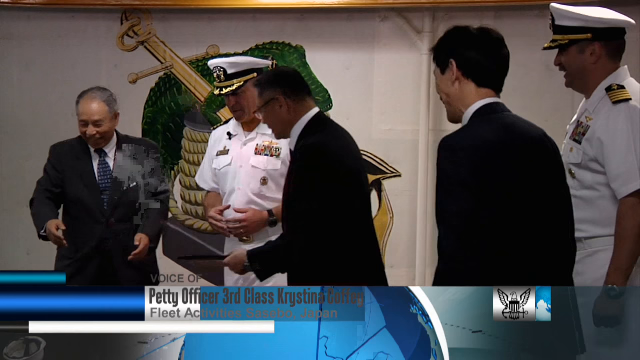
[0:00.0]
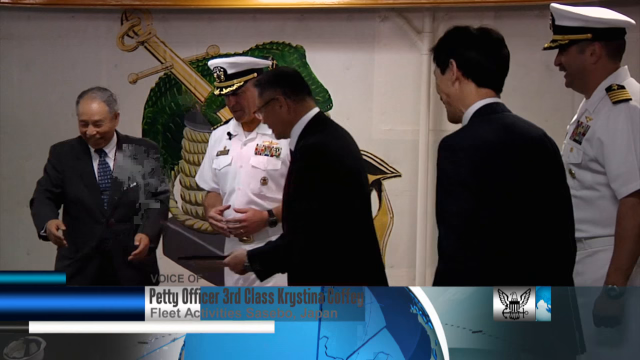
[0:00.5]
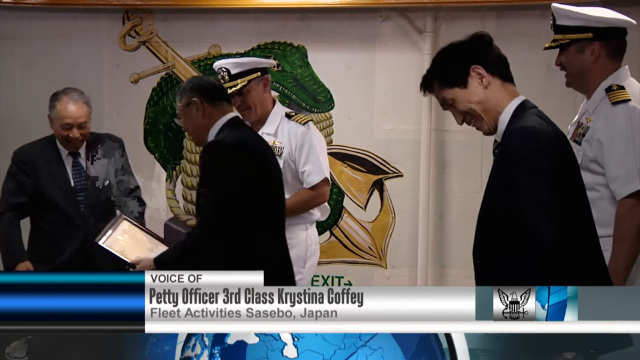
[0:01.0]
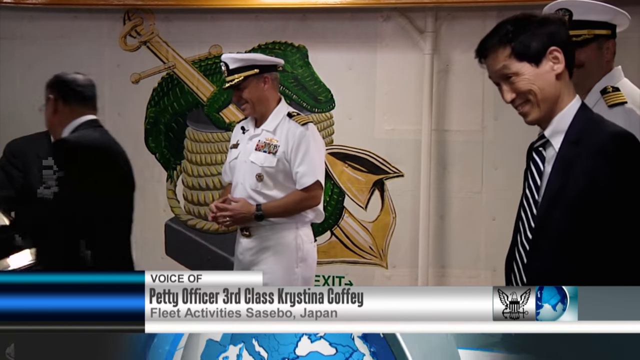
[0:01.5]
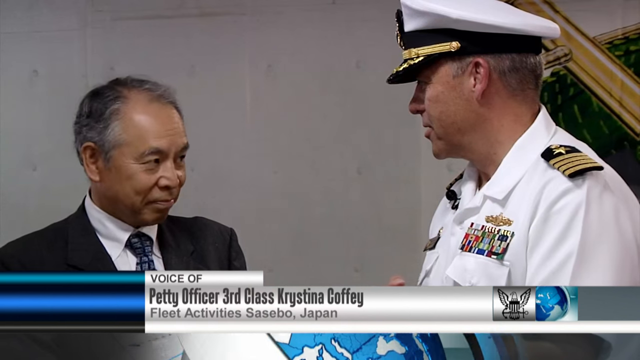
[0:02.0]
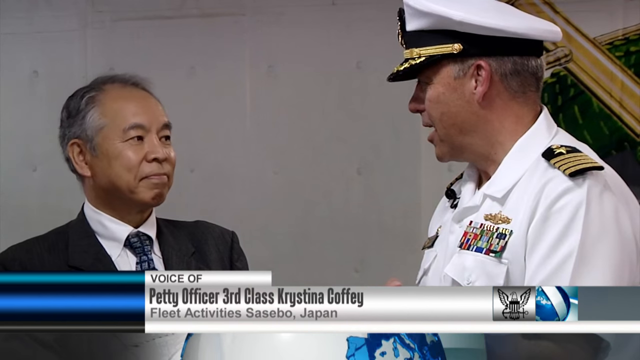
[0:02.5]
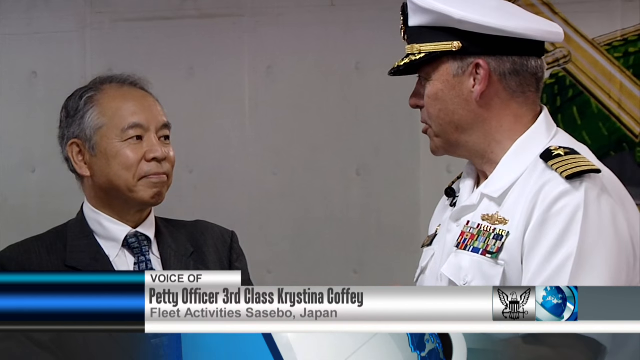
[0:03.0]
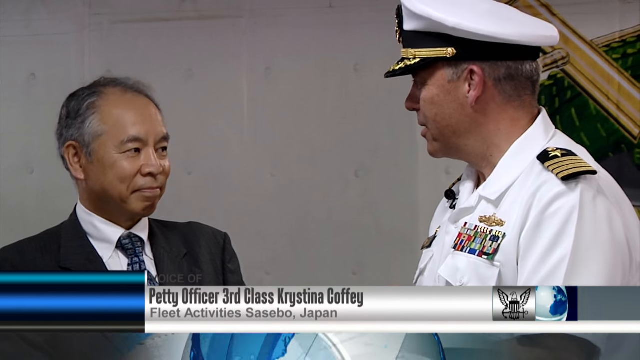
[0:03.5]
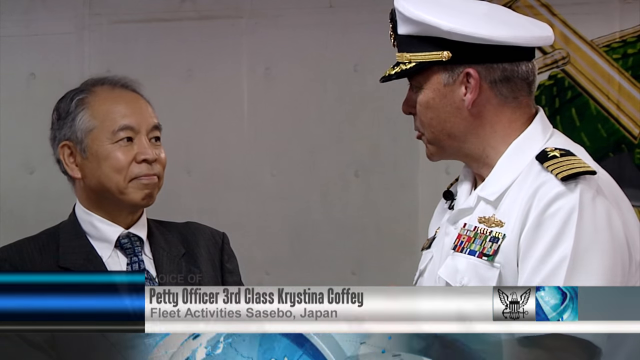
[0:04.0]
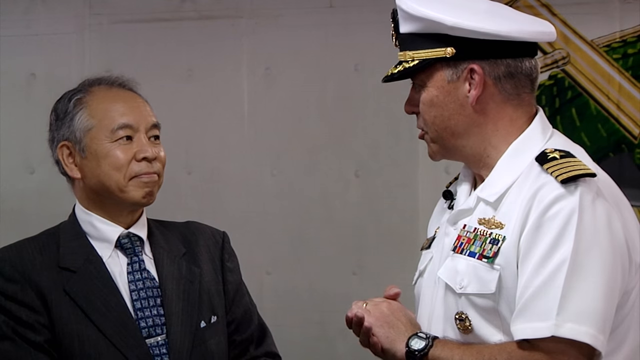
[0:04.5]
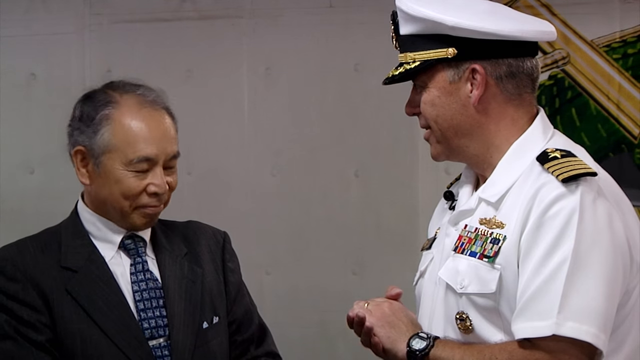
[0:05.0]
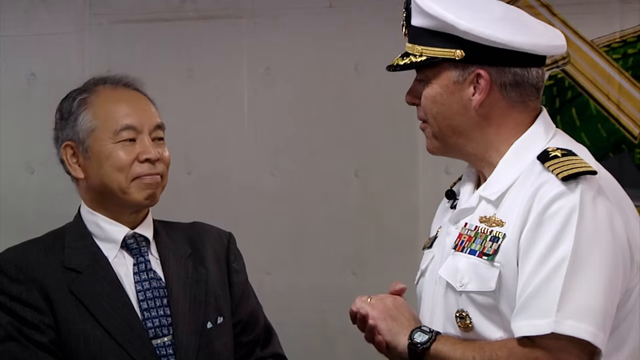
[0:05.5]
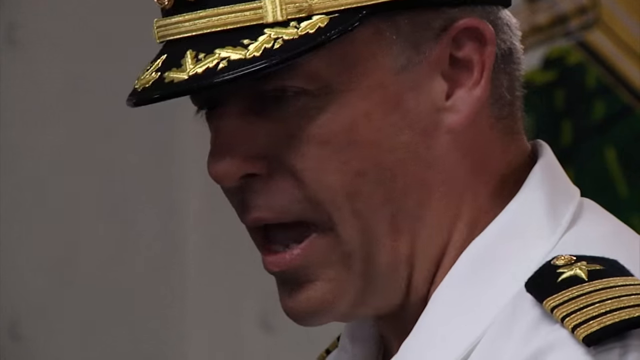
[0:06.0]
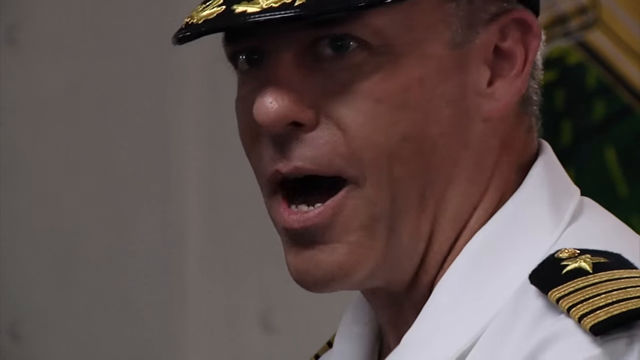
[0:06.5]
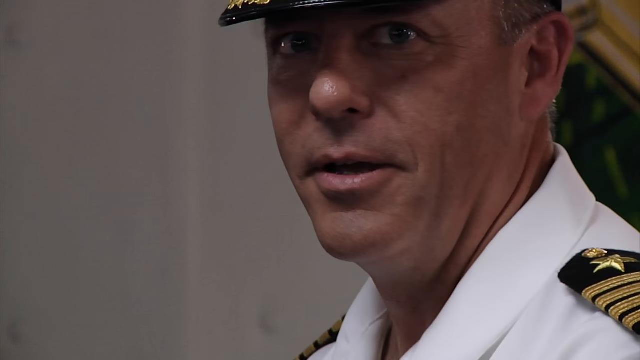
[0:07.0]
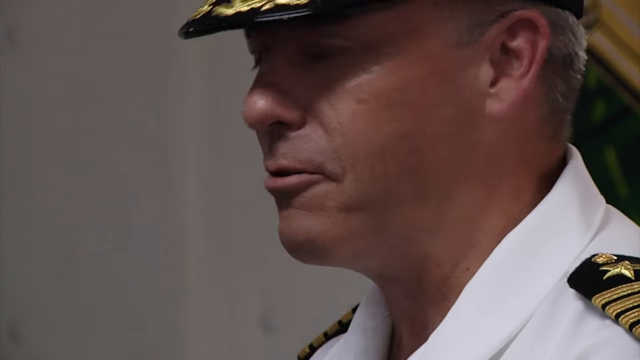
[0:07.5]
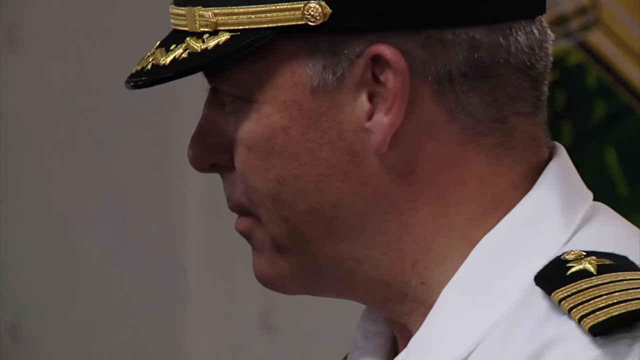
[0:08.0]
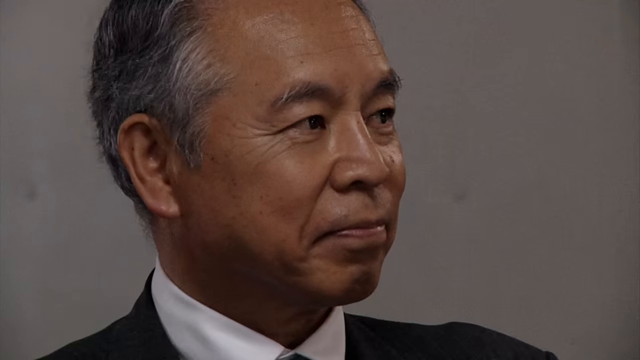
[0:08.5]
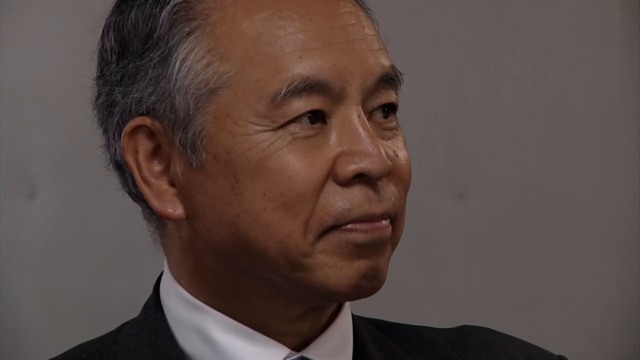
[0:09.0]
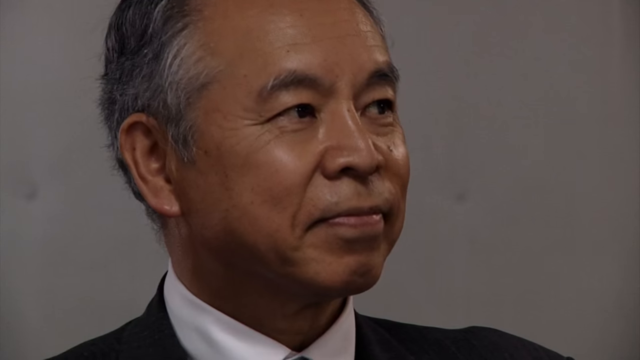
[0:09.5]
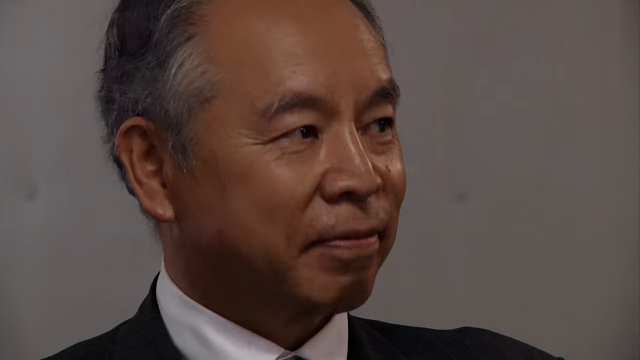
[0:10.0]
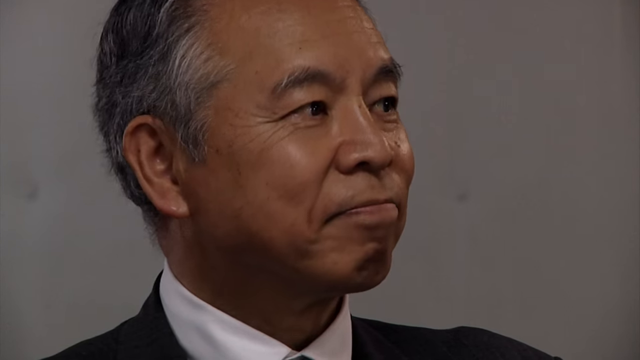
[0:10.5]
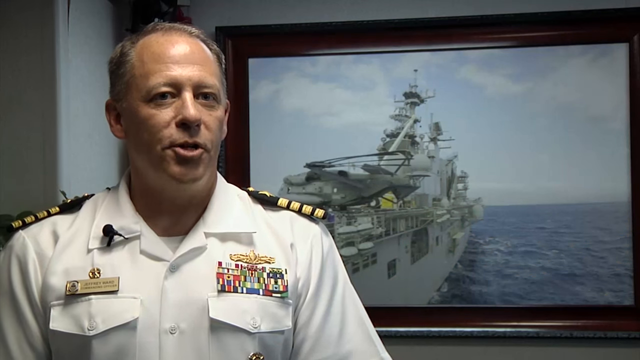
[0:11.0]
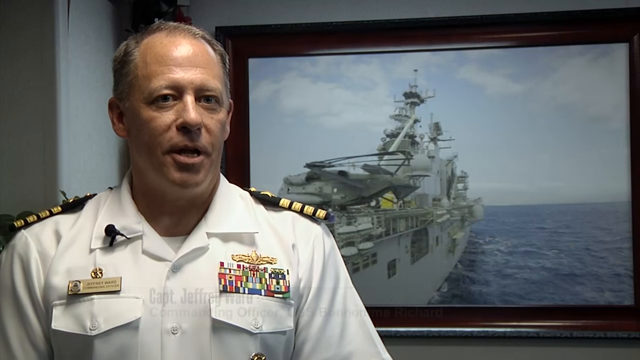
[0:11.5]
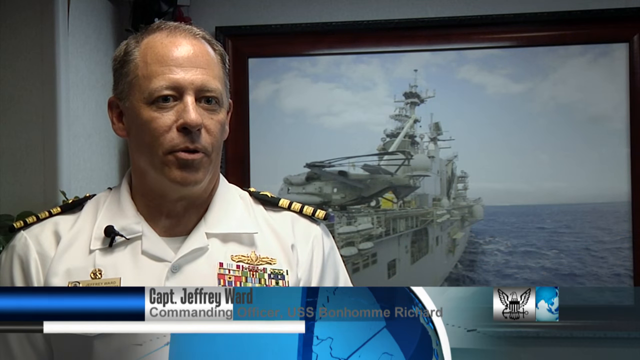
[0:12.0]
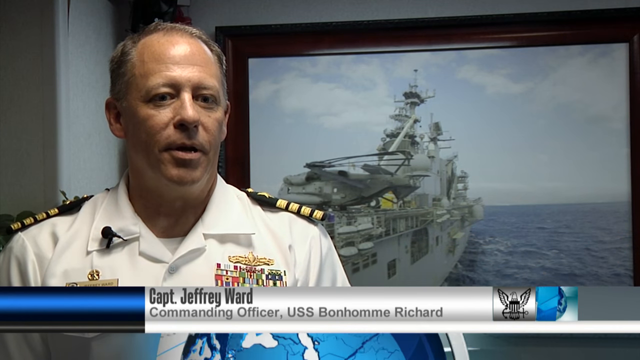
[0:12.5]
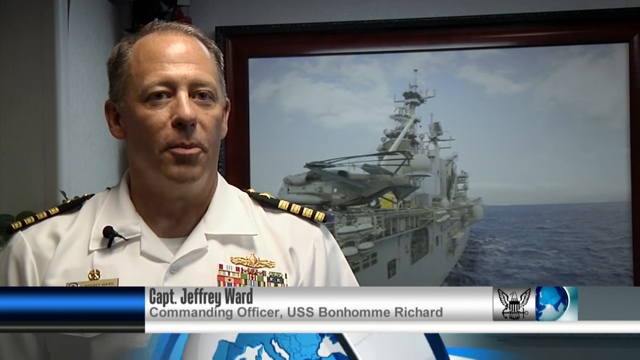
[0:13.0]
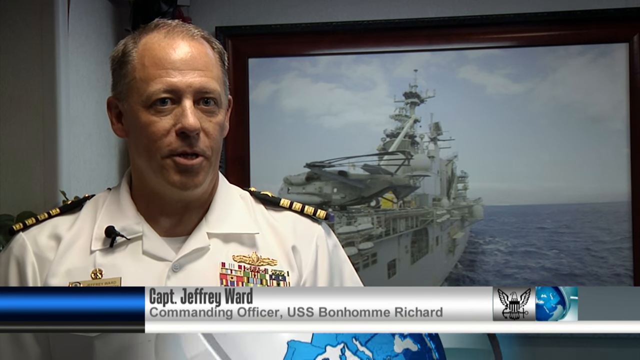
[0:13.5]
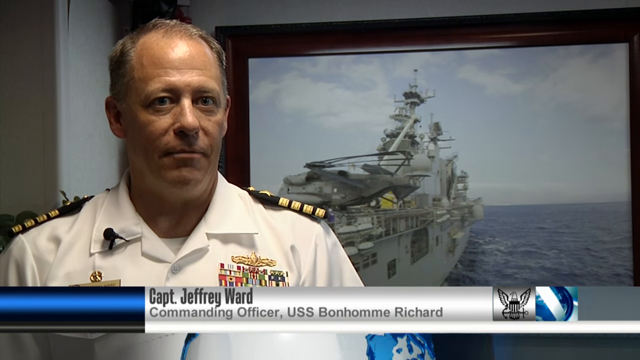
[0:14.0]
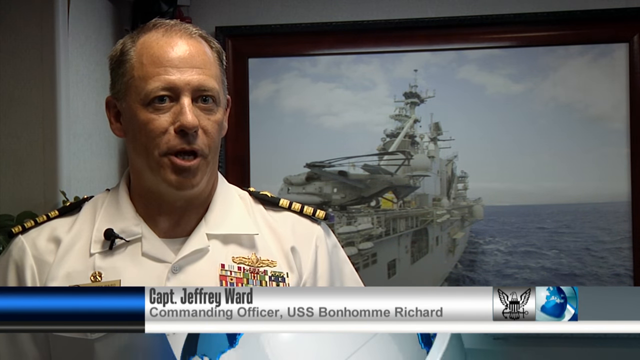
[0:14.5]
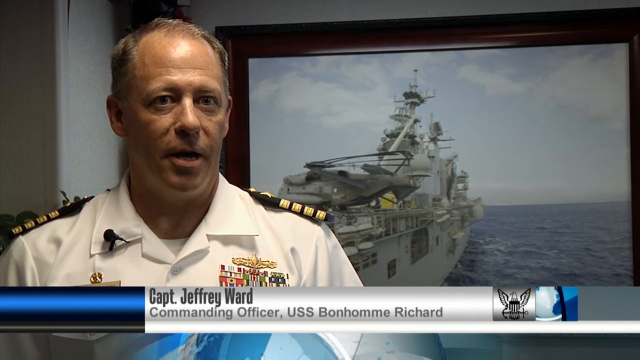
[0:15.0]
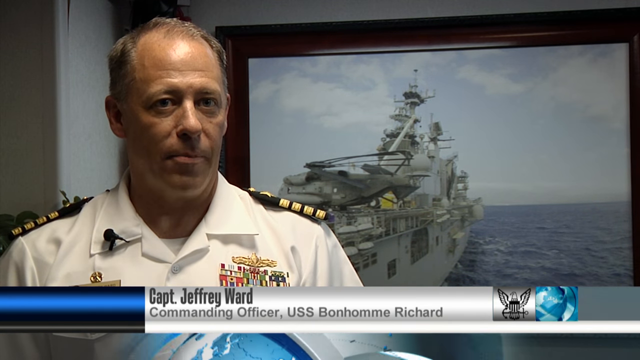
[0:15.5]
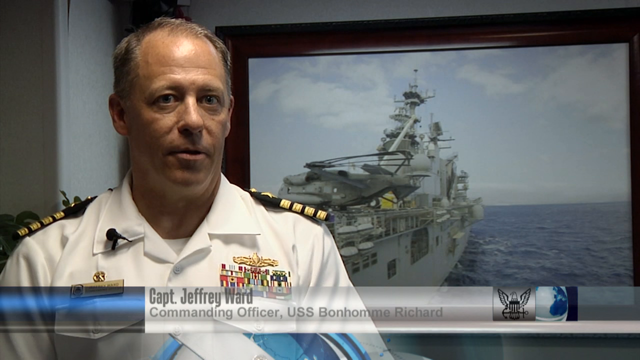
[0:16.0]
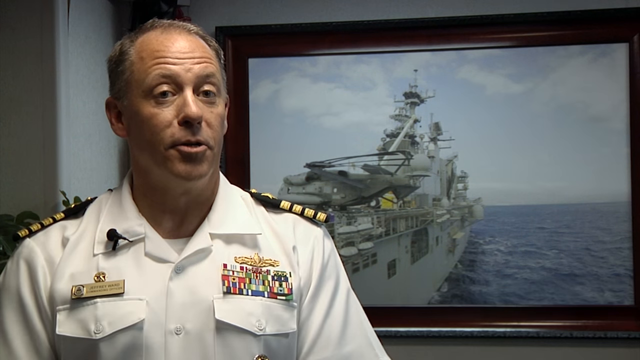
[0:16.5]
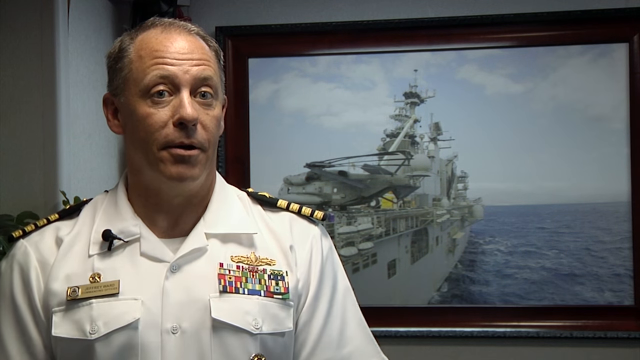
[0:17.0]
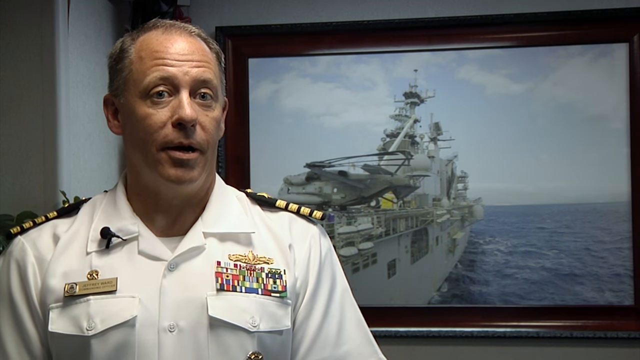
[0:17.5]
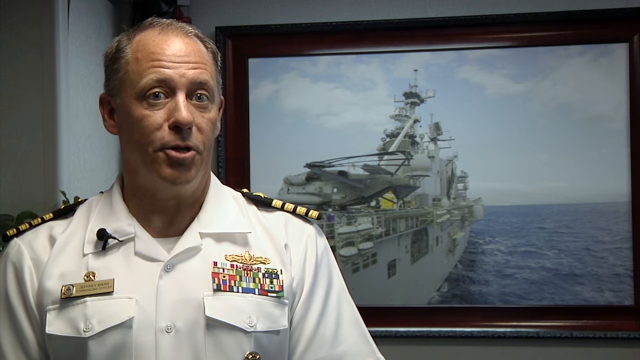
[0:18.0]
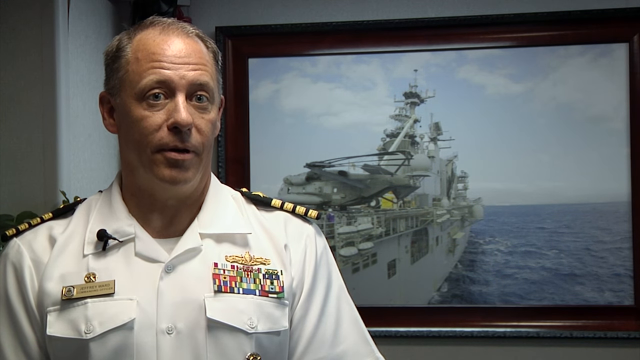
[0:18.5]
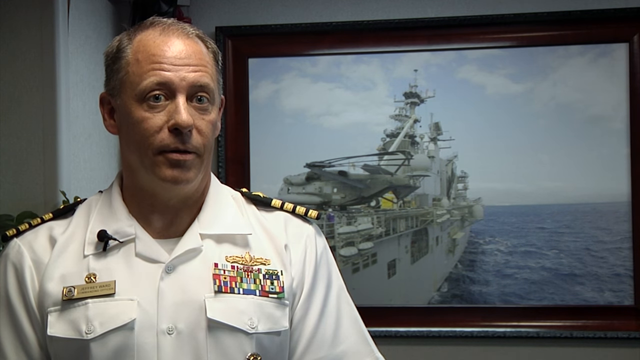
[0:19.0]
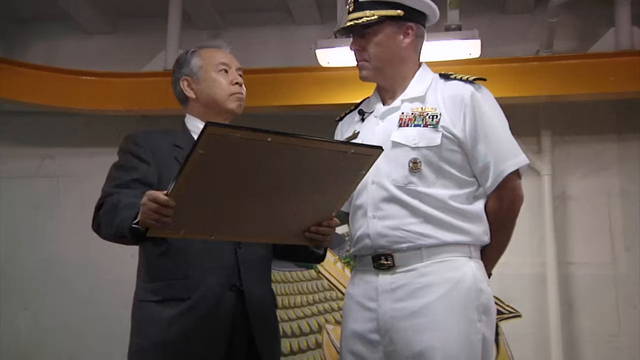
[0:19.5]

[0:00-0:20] A man wears a hat that shades his face a little. On-screen text states that the video is narrated by the voice of "Petty Officer 3rd Class Christina Coffey," along with "Fleet activities, Sasebo, Japan." Several American soldiers in white dress have many awards pinned to the front and epaulettes on their shoulders. They are standing near a shorter Japanese man who is laughing. There are two other Japanese men, making three Japanese men and two American men, and they are all laughing. A close-up then shows the highest-ranking officer and a Japanese man talking together. The Japanese man's face is easier to see: he looks somewhat older, apparently in his 60s, with his mouth kind of pursed, not a grin but not a glare either. He watches the American, nodding his head or bowing and closing his eyes, with a little tension visible in his nasolabial folds. An extreme close-up shows the American talking; he looks a little like actor Dennis Quaid and talks in a garrulous way. A close-up shows the Japanese man kind of observing and nodding. The scene changes to the same American man seated in front of a picture of an aircraft carrying boat, with text identifying him as "Captain Jeffrey Ward, the commanding officer, USS Bonhomme Richard." He talks with his face very still while only his mouth moves in a very enunciated way, though he raises his eyebrows and blinks a few times.